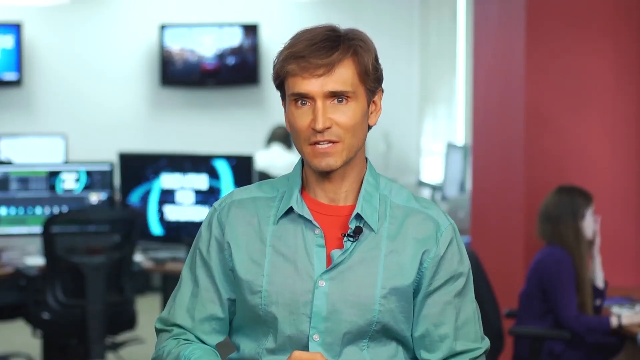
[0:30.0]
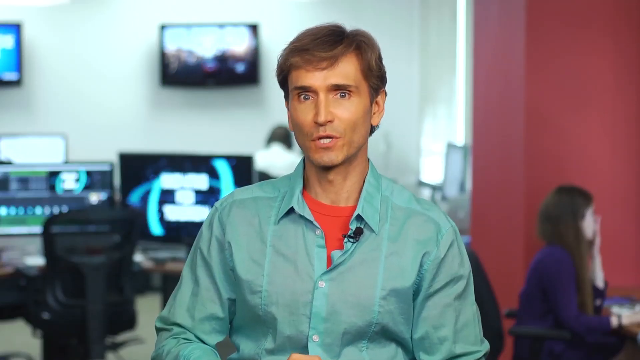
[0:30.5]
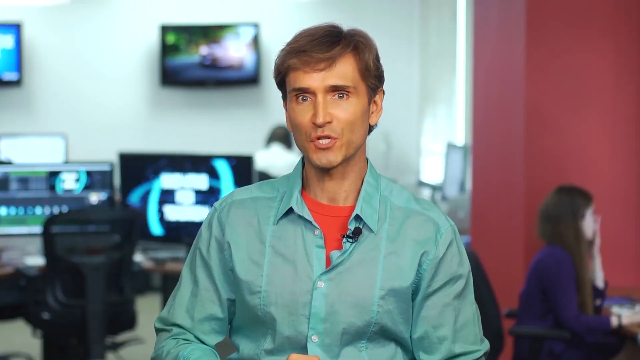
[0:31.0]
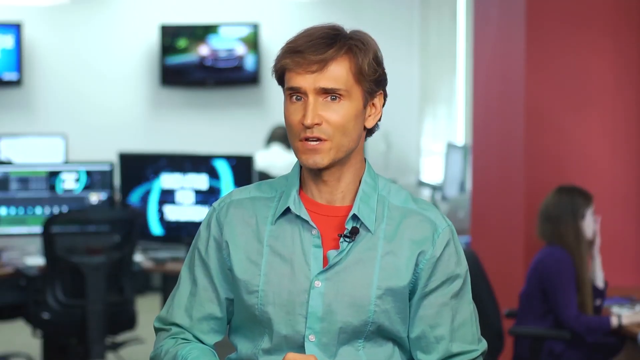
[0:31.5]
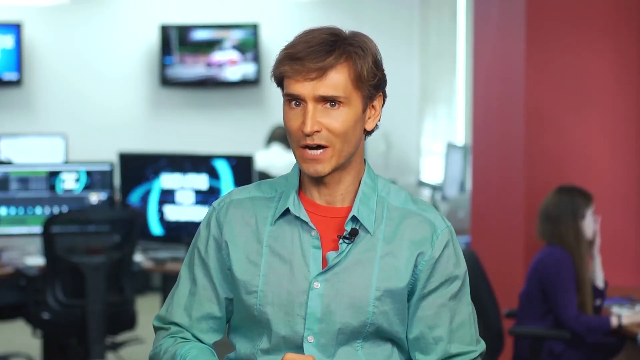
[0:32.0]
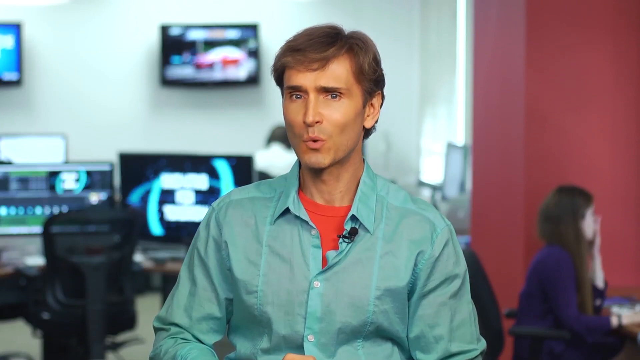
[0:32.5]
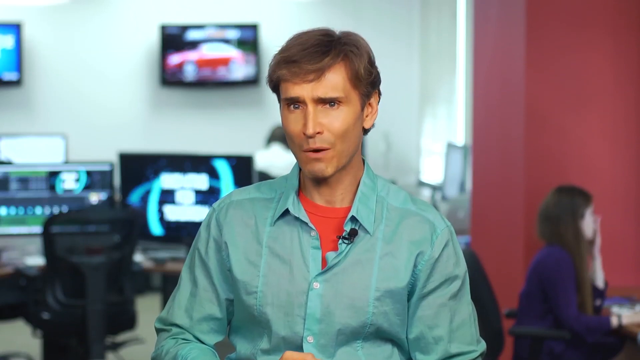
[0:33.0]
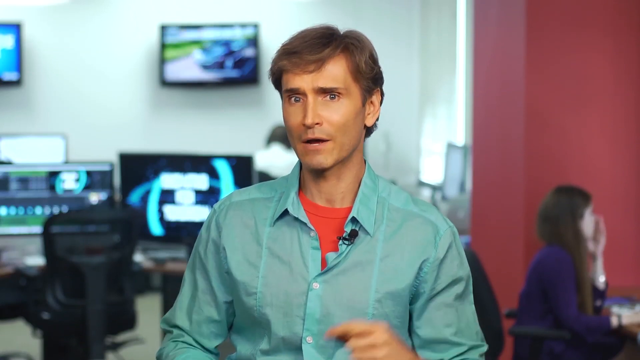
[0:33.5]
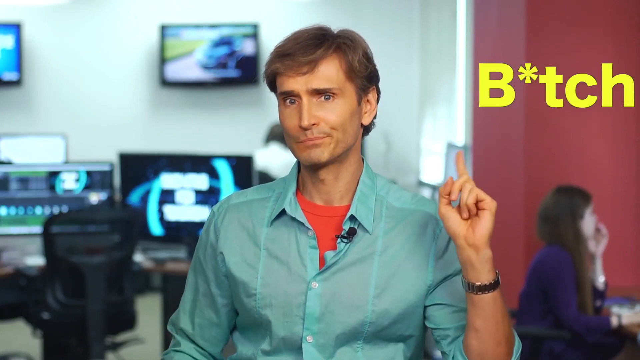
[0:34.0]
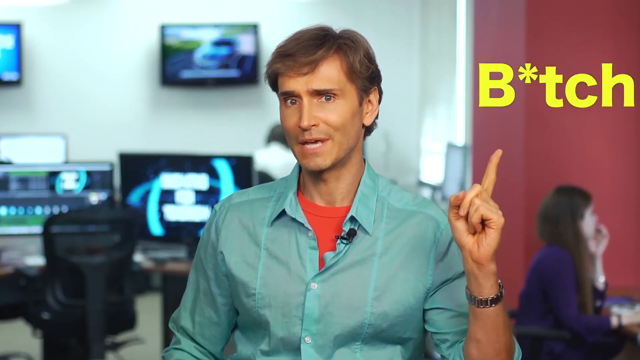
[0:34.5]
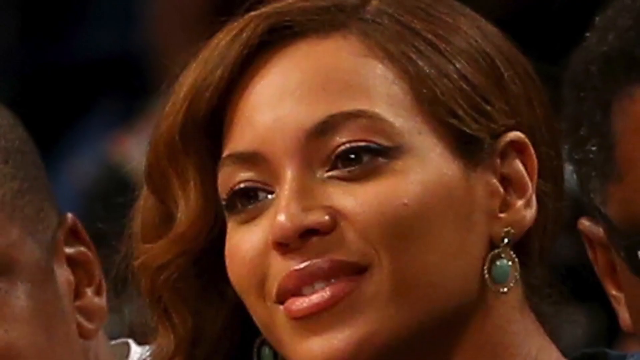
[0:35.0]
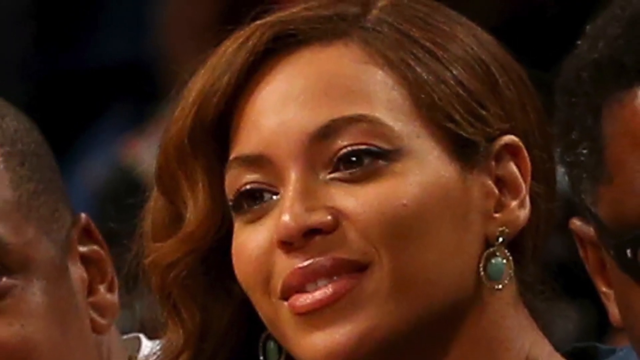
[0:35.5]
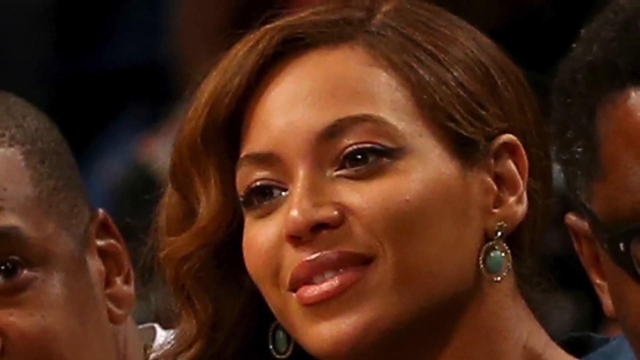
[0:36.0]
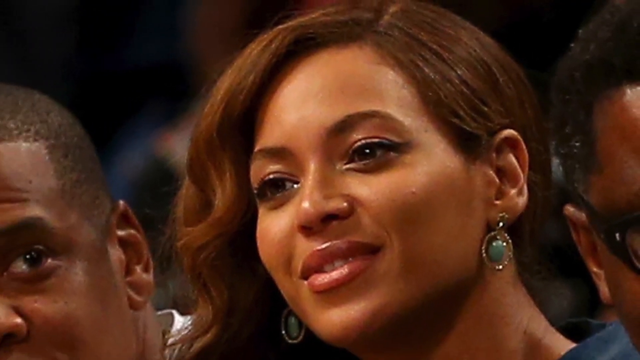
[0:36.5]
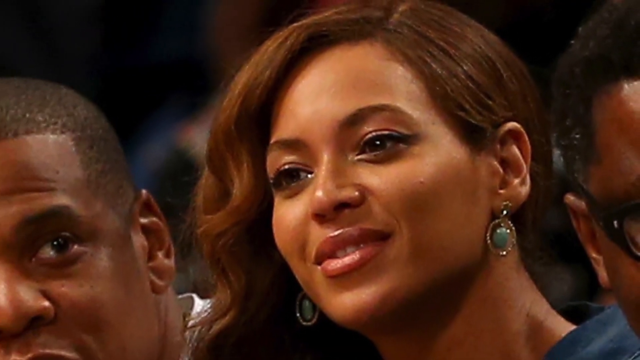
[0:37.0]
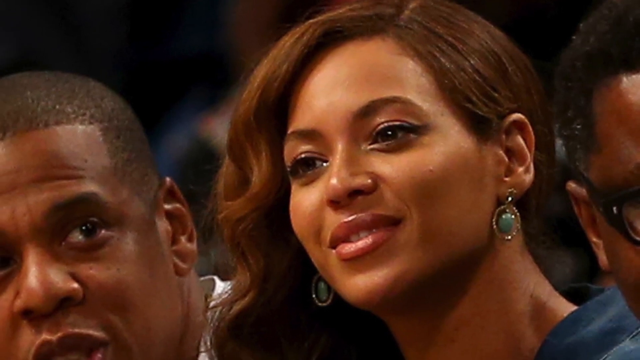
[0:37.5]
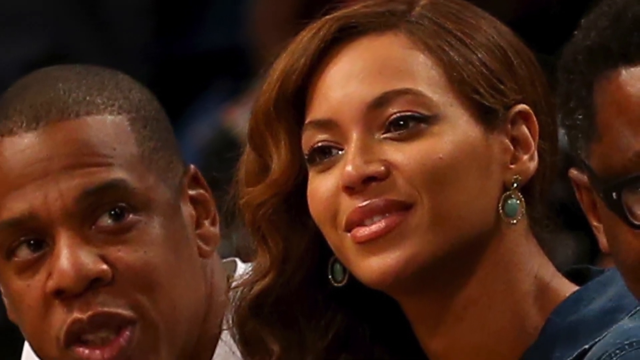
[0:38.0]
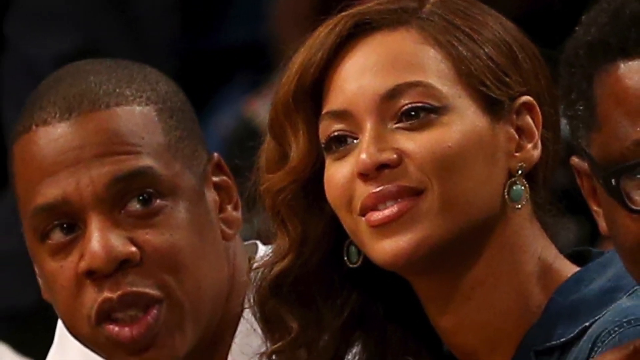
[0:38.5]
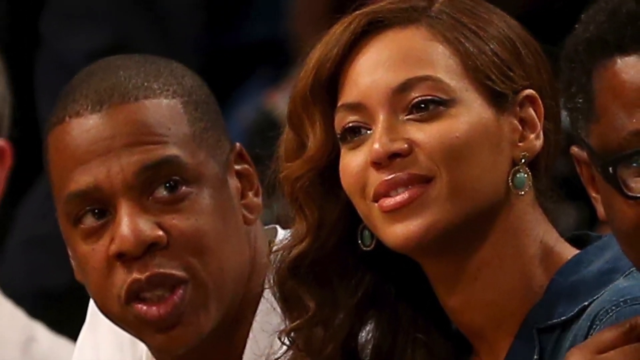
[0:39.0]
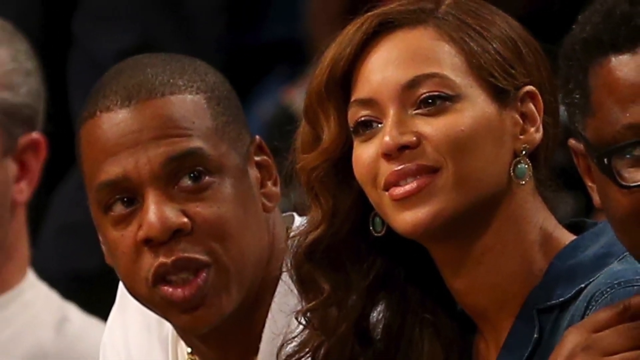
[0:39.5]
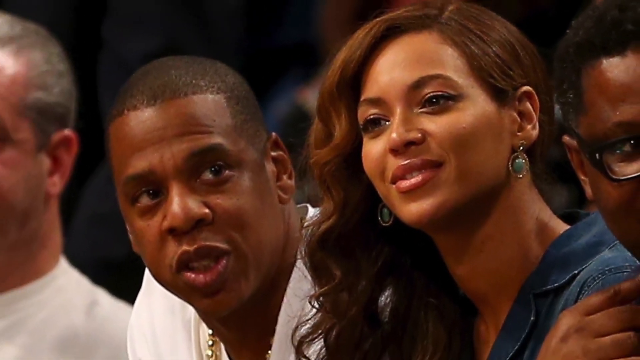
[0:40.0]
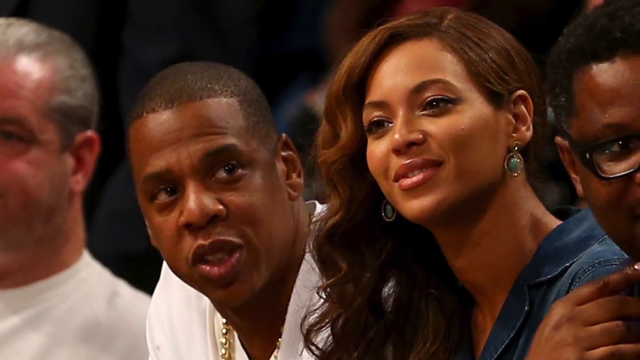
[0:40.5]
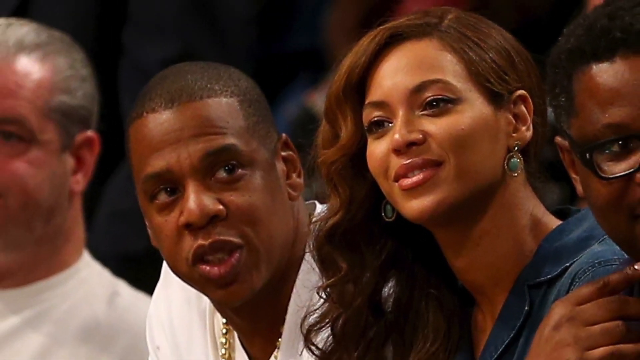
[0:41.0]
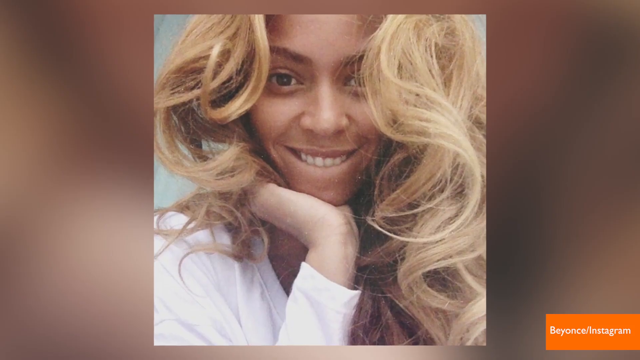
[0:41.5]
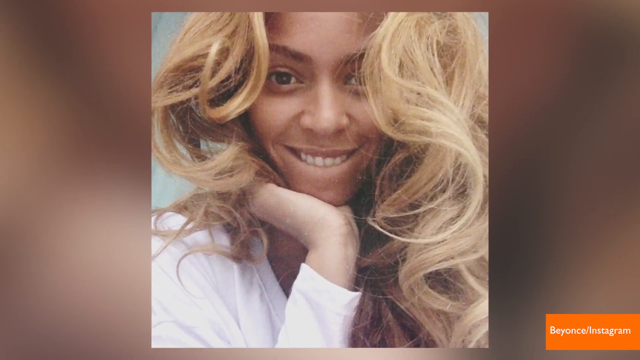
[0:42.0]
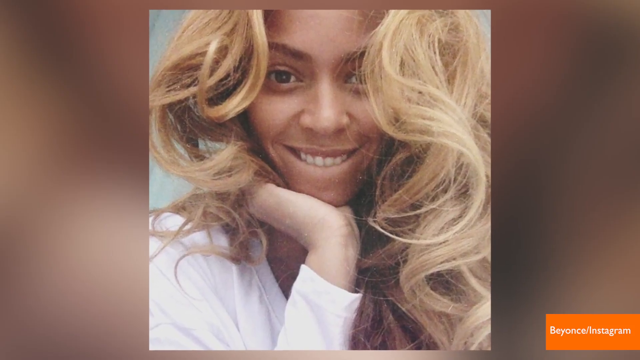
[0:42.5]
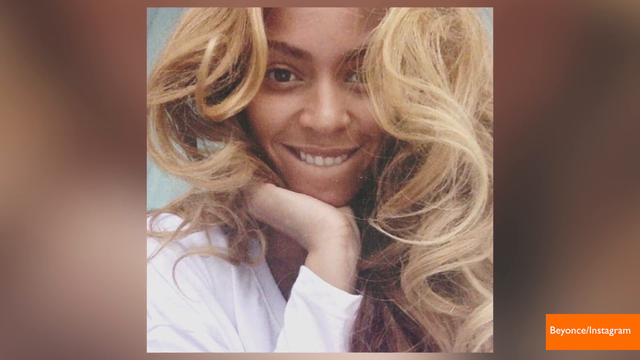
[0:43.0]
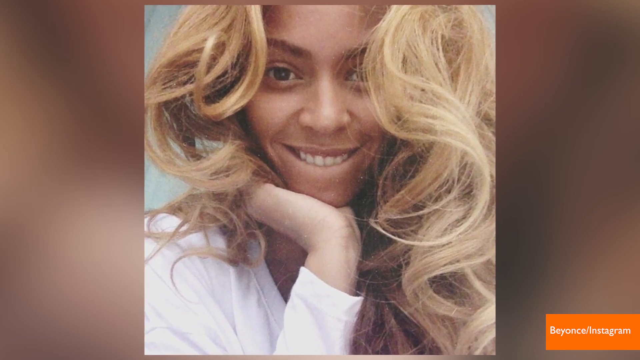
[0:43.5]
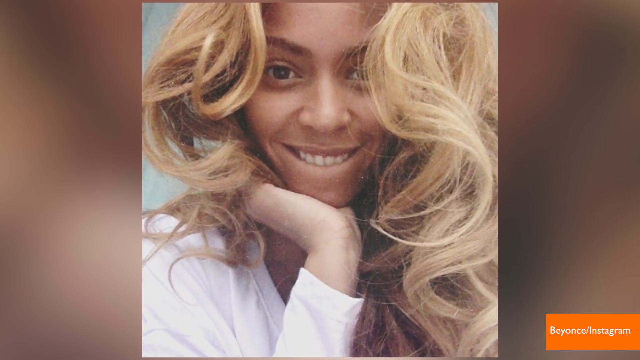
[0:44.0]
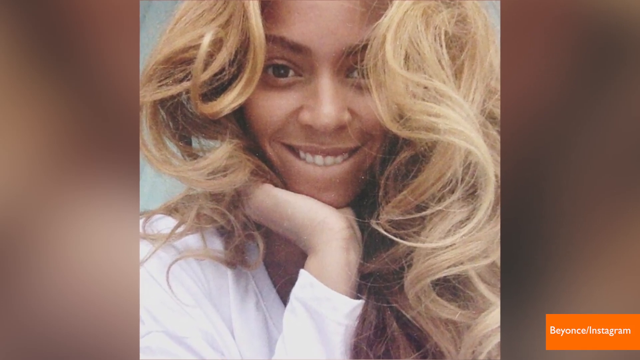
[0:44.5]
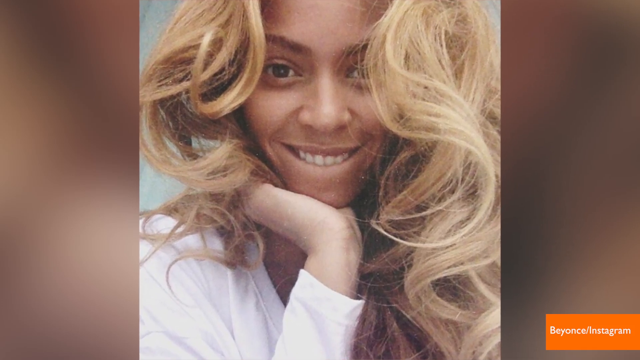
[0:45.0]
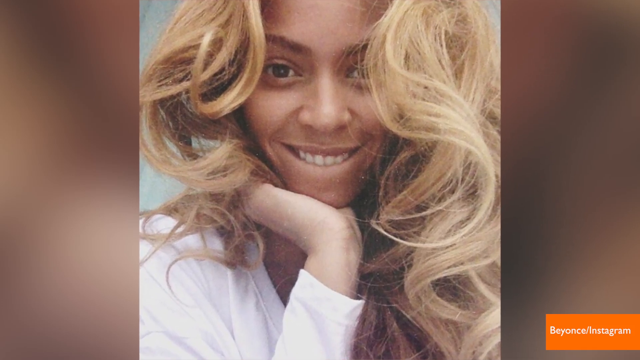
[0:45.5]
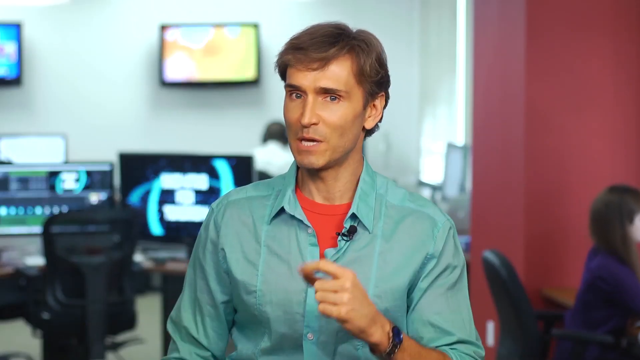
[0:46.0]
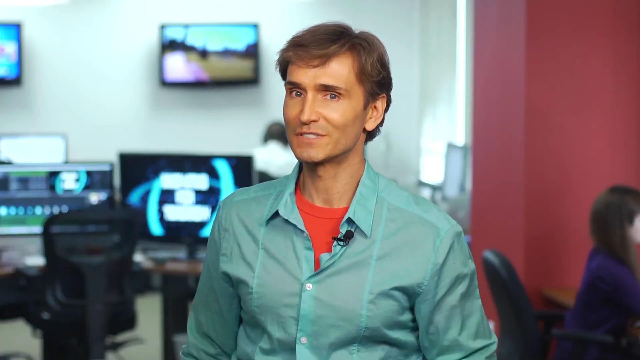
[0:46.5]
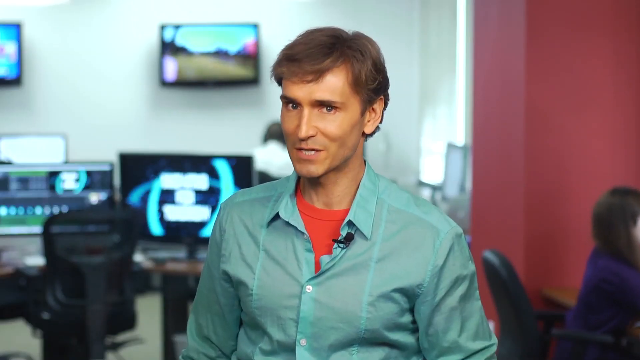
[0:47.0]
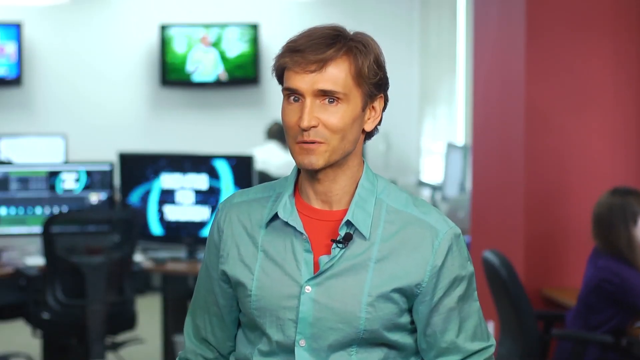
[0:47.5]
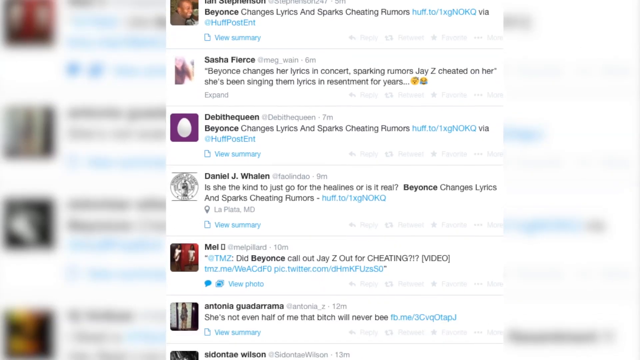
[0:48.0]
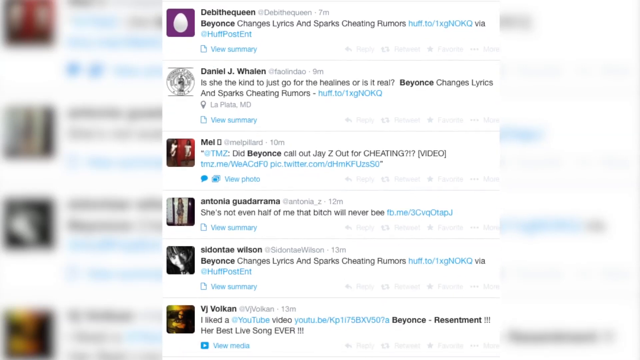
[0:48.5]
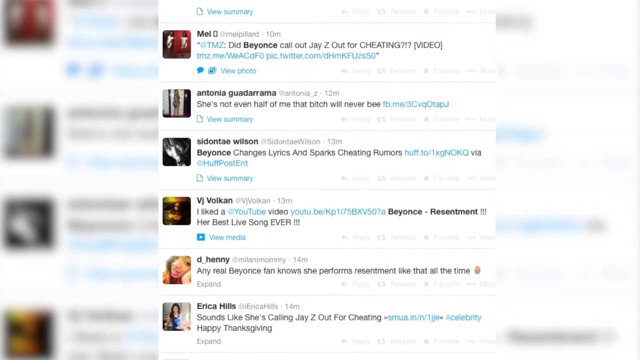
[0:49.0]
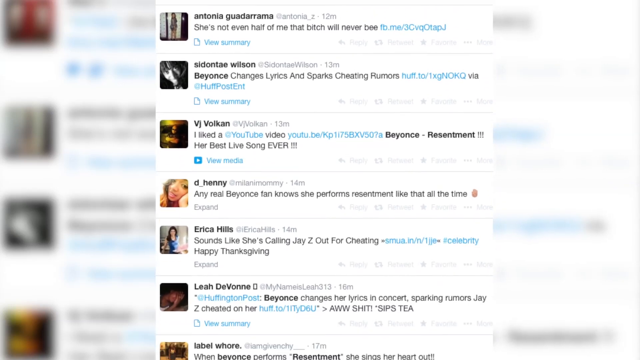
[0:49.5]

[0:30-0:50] The reporter talks and nods his head up and down, then points up with his left hand toward the upper right-hand corner of the screen, where "B*TCH" appears in yellow text, possibly as a quote of some sort. The video cuts to a photo that zooms out from Beyoncé, with Jay-Z next to her on the left-hand side; more of Jay-Z comes into view, then the rest of the photo, showing a man to the left of Jay-Z and another man to the right of Beyoncé, four people in all. It then cuts to another photo of Beyoncé that looks like a selfie: her wavy hair is kind of in front, she puts her hand on her chin, and she is kind of biting her lower lip with her upper teeth, her upper lip visible. The video cuts back to the reporter talking, and he scrolls through tweets.